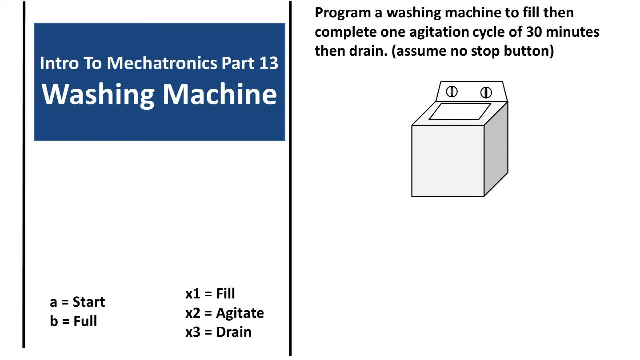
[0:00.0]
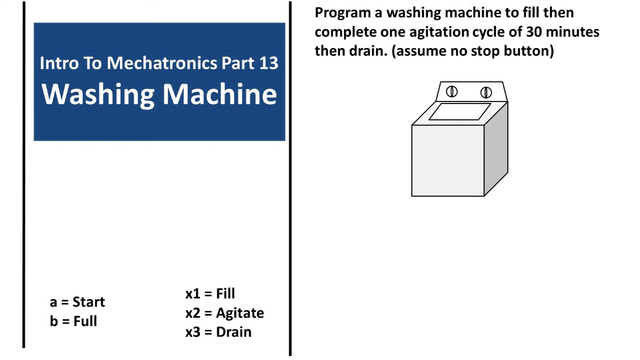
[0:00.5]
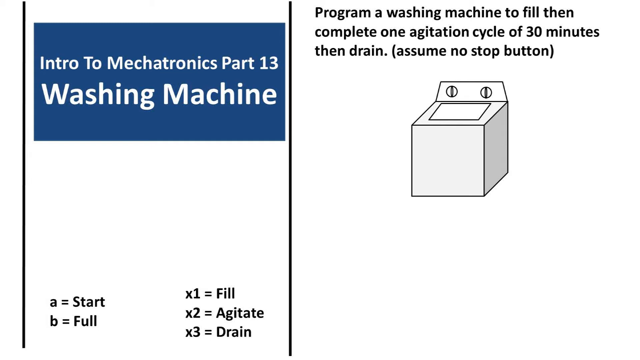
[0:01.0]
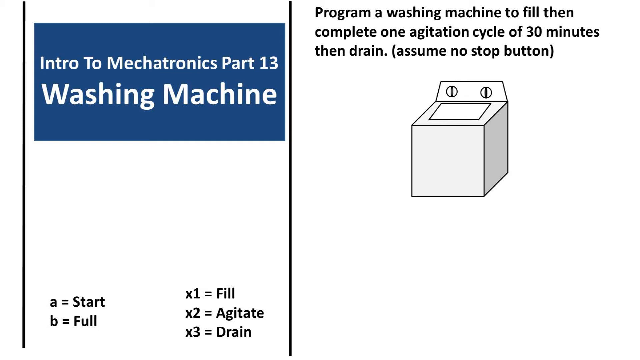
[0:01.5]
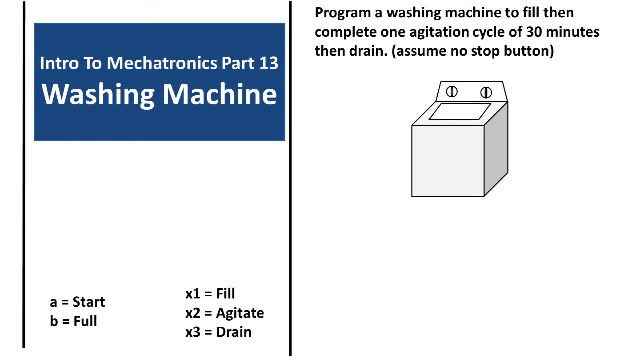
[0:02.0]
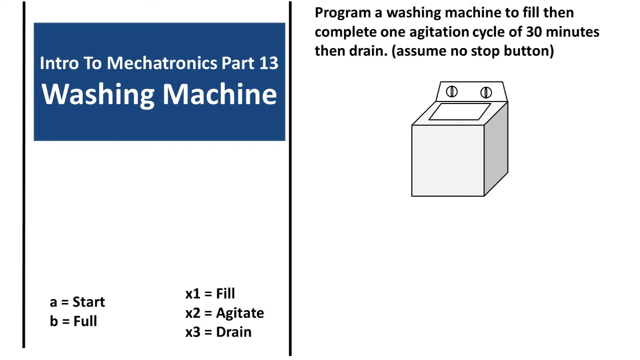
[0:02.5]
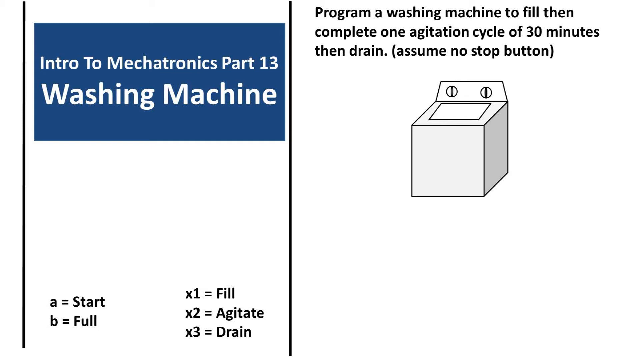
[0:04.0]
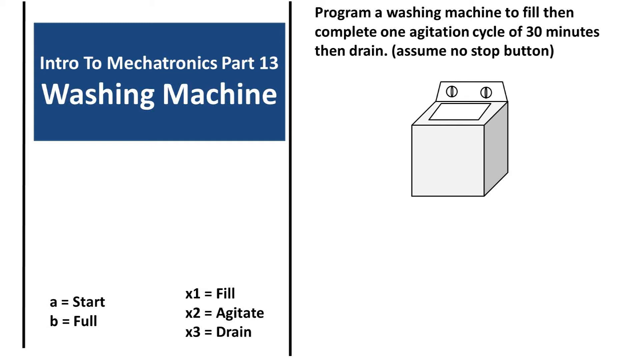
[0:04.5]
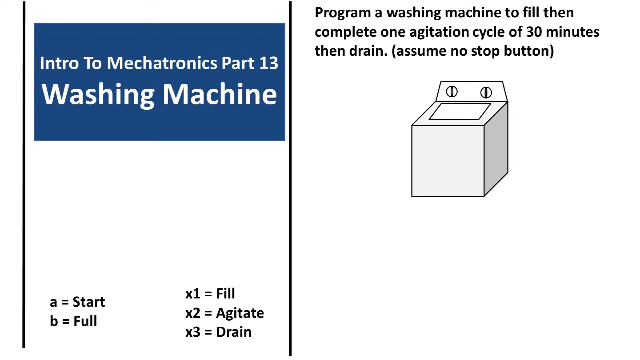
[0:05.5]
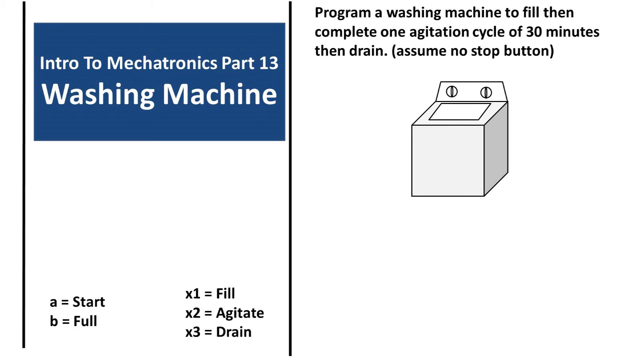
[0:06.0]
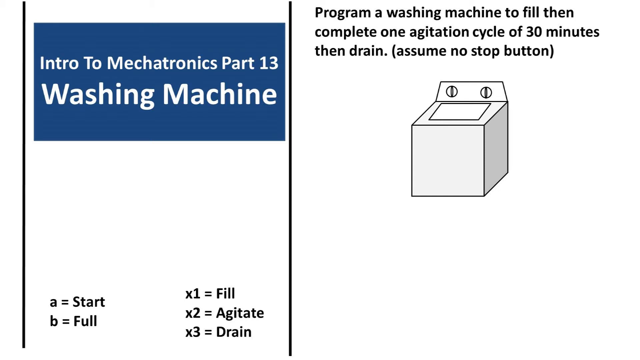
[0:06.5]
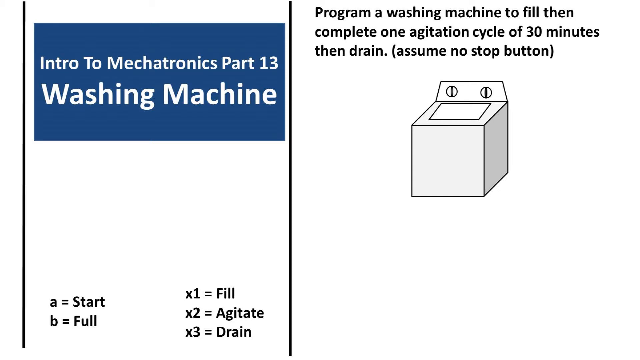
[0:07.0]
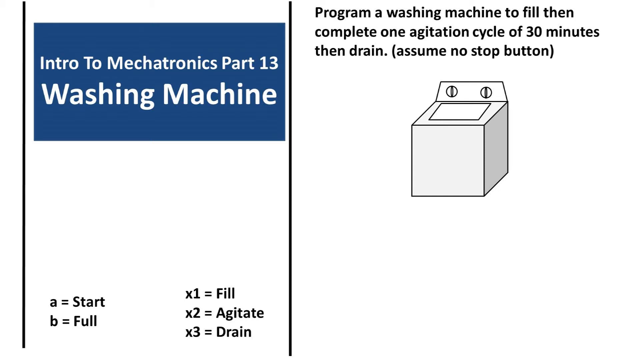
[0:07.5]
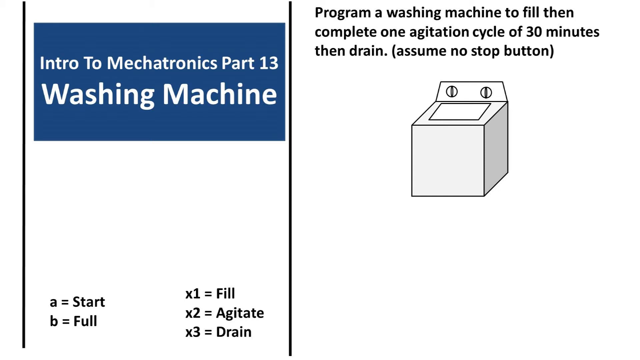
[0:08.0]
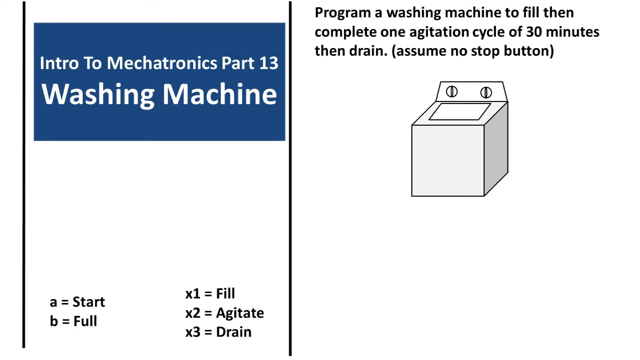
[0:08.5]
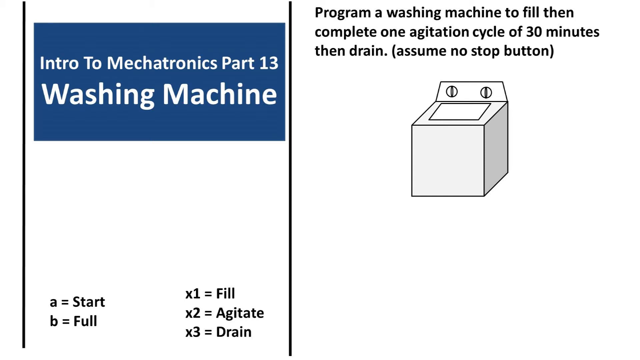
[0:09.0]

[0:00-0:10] The screen has two columns. The left one, with a blue section at the top, says "Intro to Mechatronics, Part 13, Washing Machine". At the bottom are variables that say "A = Start", "B = Full", "X1 = Fill", "X2 = Shake" and "X3 = Drain". The right column has an illustration of a washing machine, with text at the top that says "Program a washing machine to fill and complete one agitation cycle of 30 minutes, then drain. (assume no stop button)".